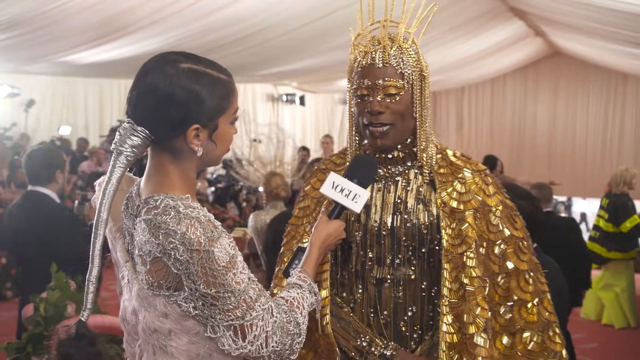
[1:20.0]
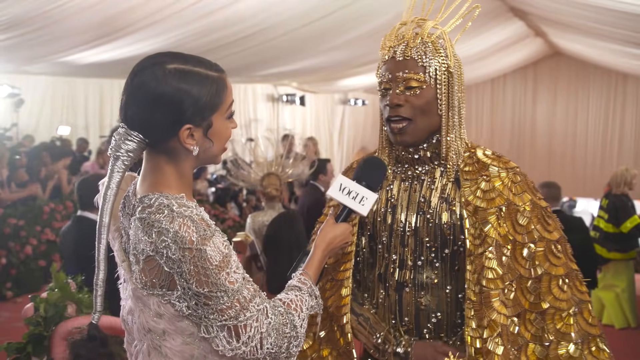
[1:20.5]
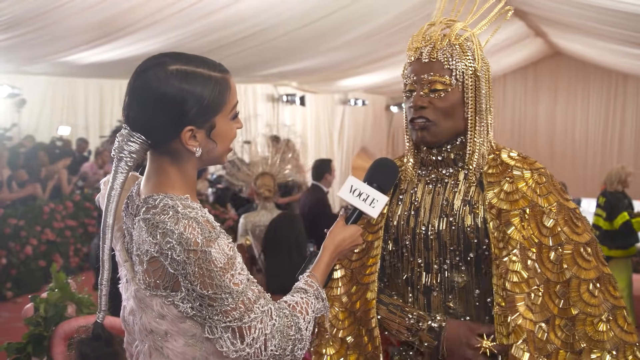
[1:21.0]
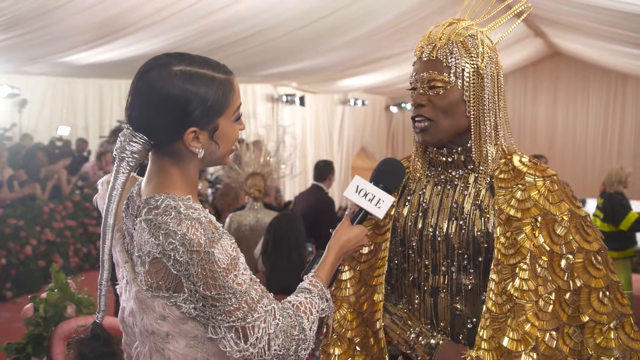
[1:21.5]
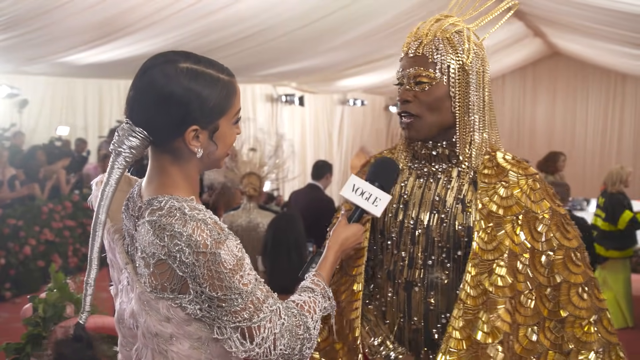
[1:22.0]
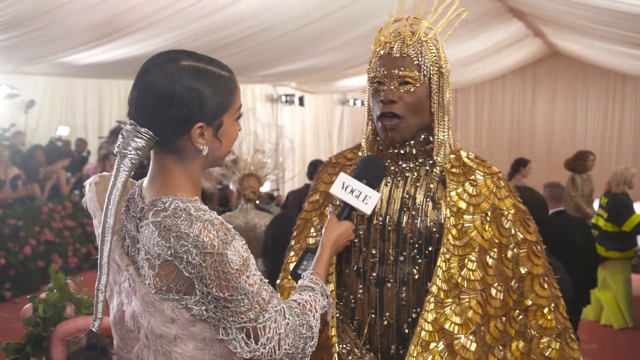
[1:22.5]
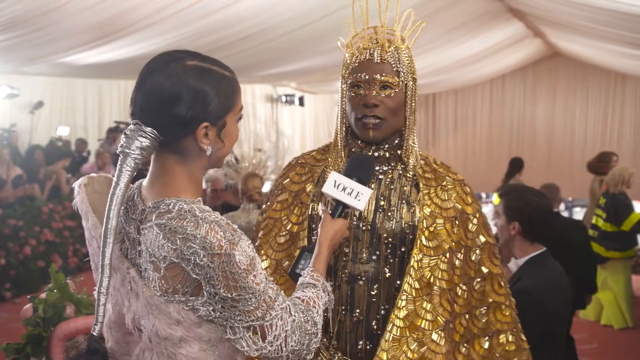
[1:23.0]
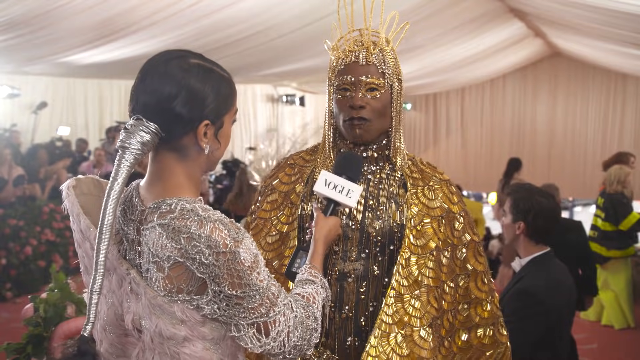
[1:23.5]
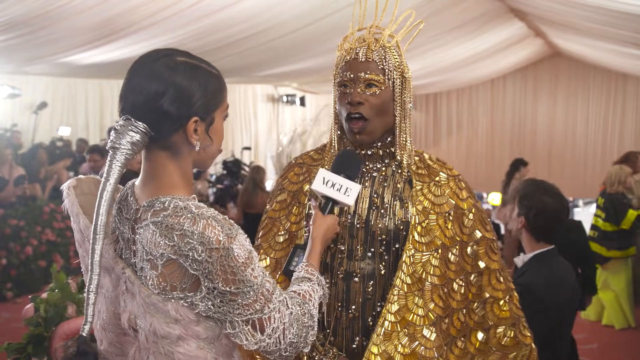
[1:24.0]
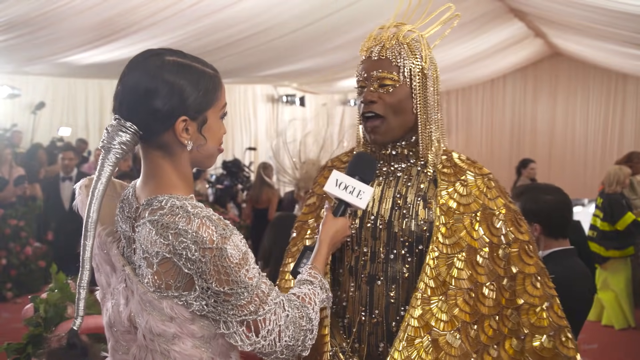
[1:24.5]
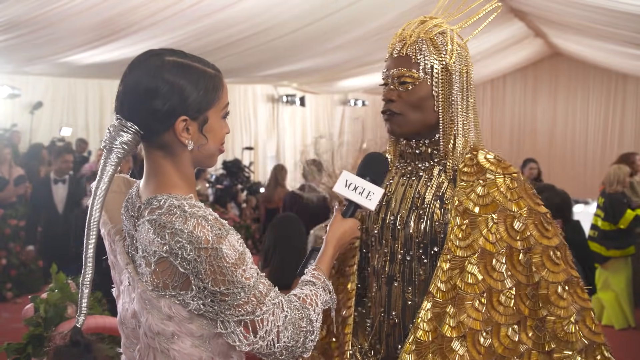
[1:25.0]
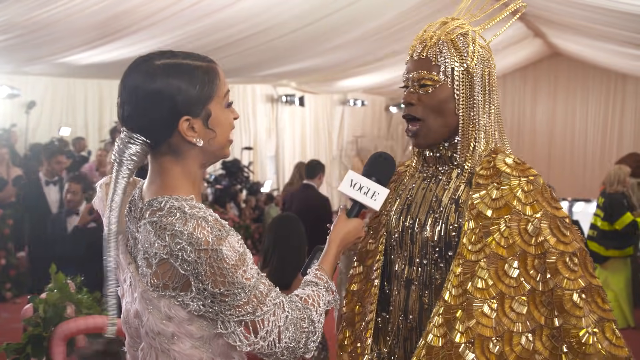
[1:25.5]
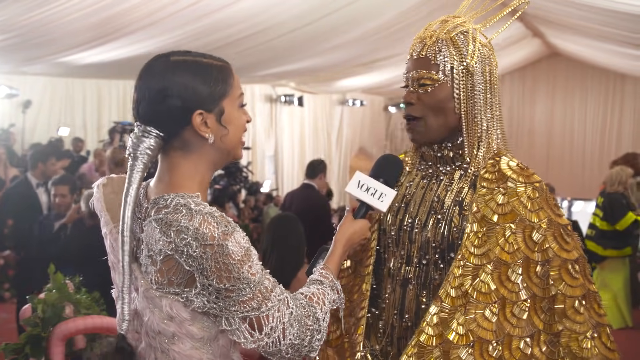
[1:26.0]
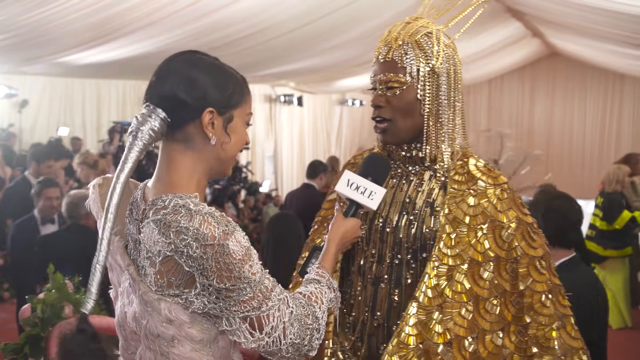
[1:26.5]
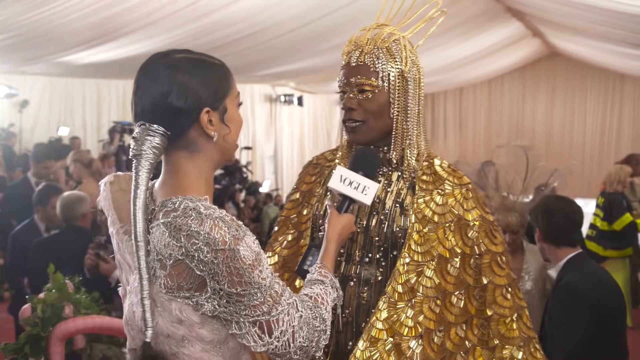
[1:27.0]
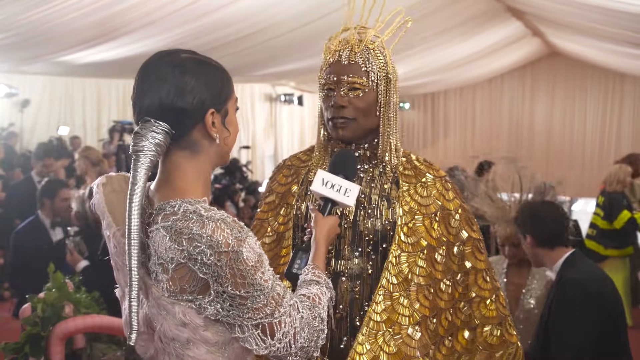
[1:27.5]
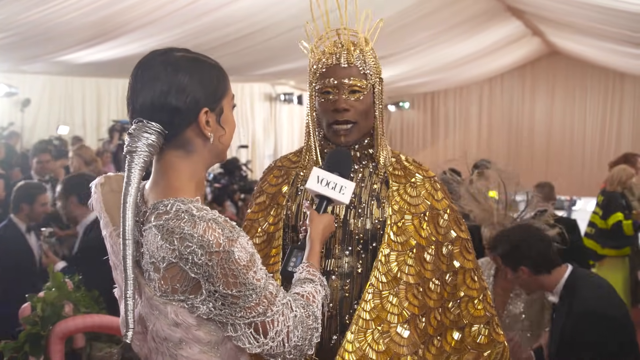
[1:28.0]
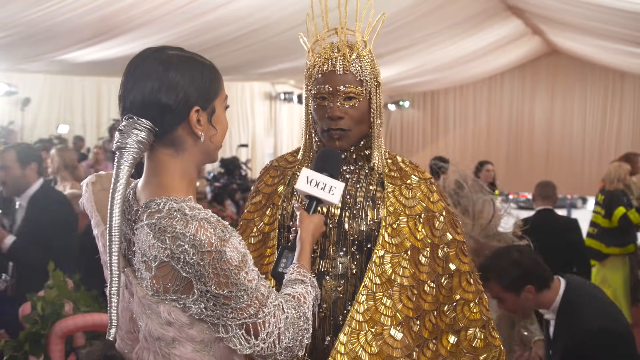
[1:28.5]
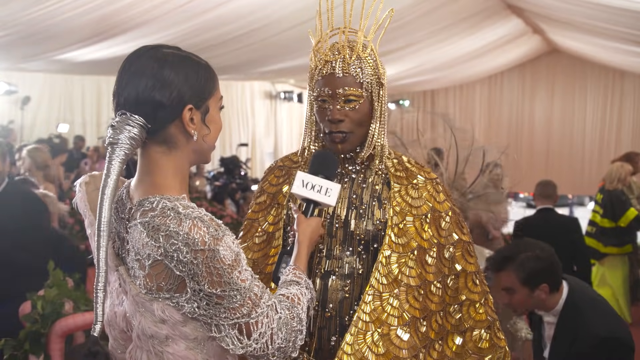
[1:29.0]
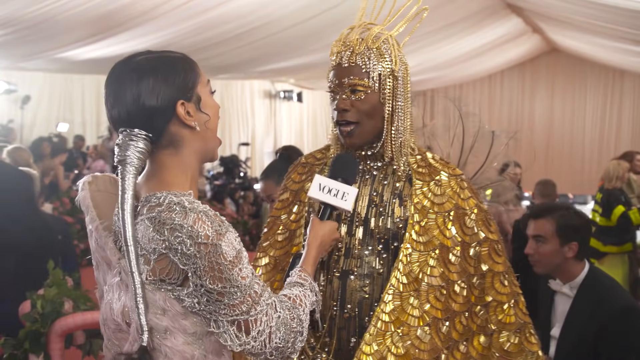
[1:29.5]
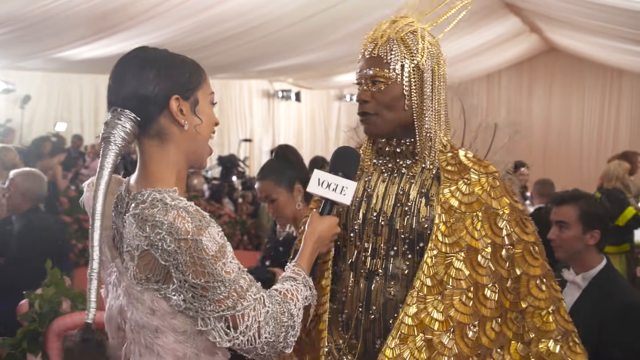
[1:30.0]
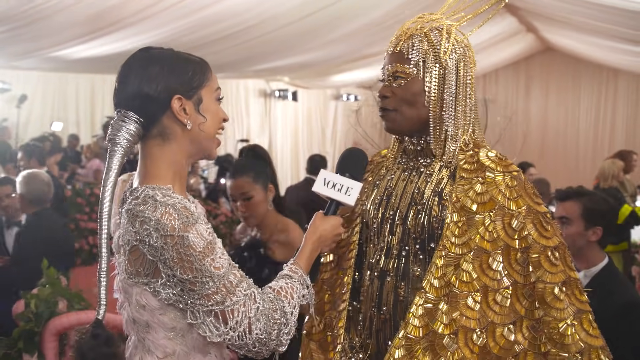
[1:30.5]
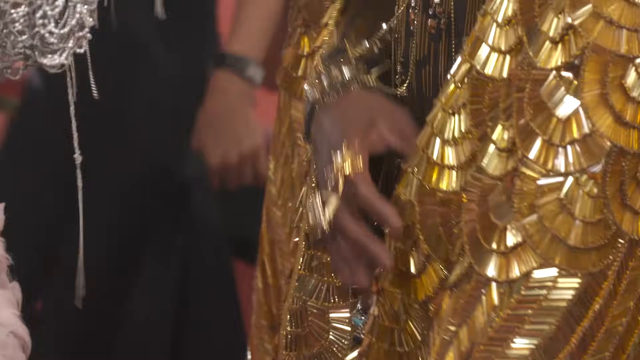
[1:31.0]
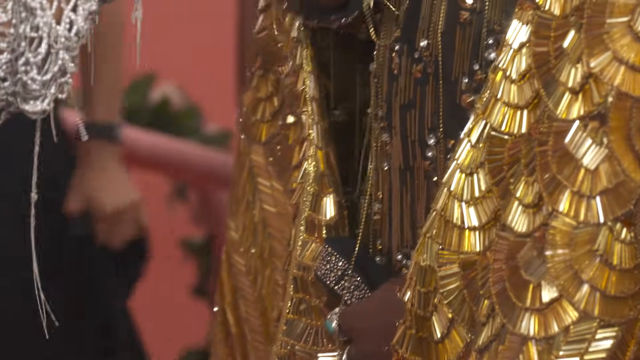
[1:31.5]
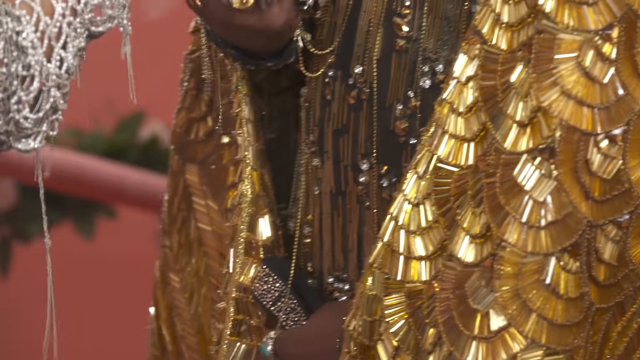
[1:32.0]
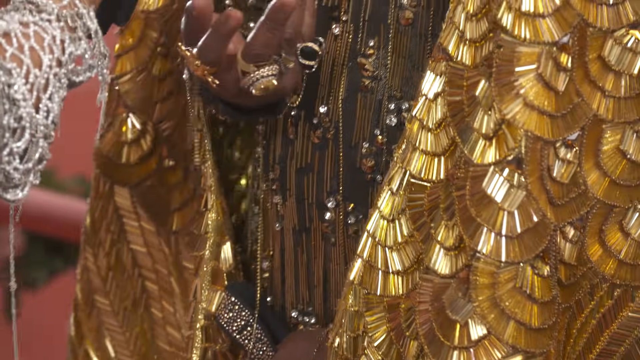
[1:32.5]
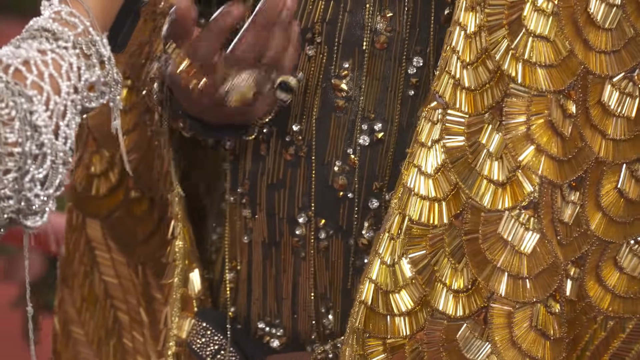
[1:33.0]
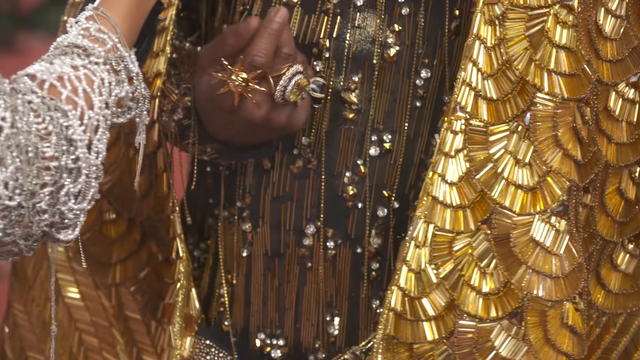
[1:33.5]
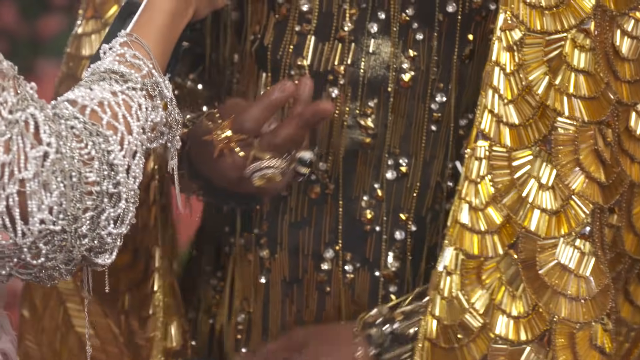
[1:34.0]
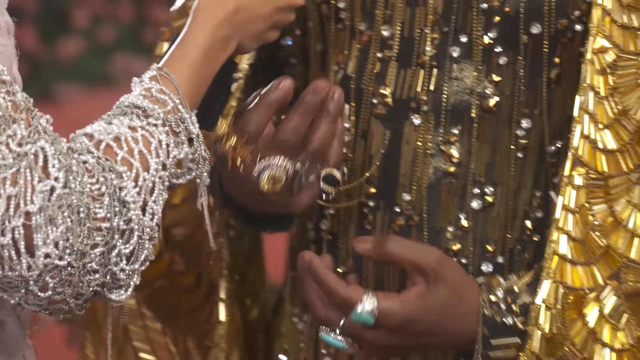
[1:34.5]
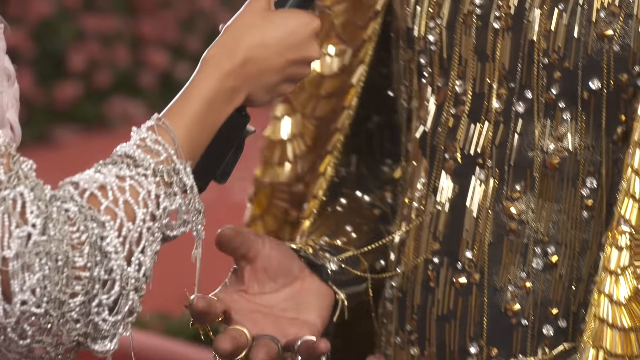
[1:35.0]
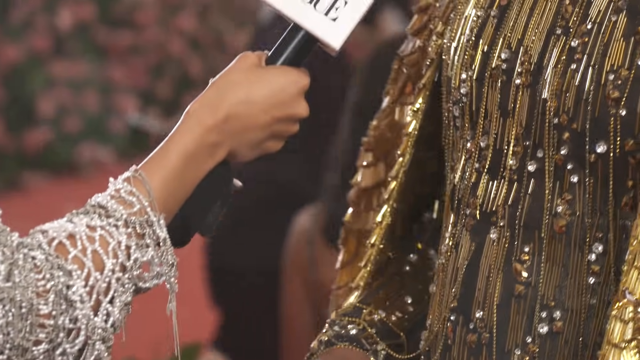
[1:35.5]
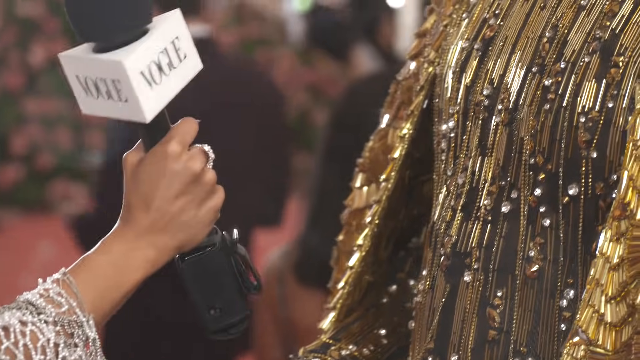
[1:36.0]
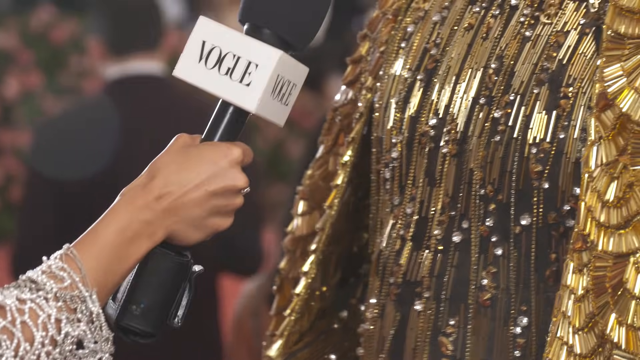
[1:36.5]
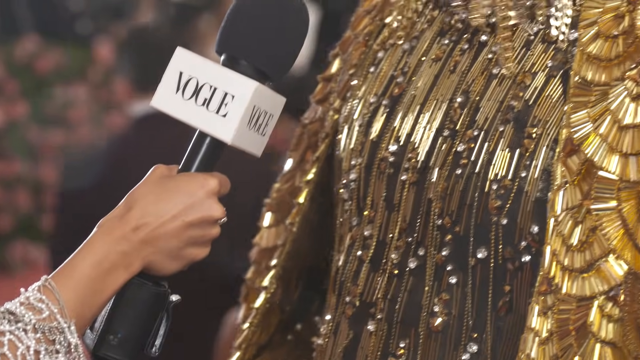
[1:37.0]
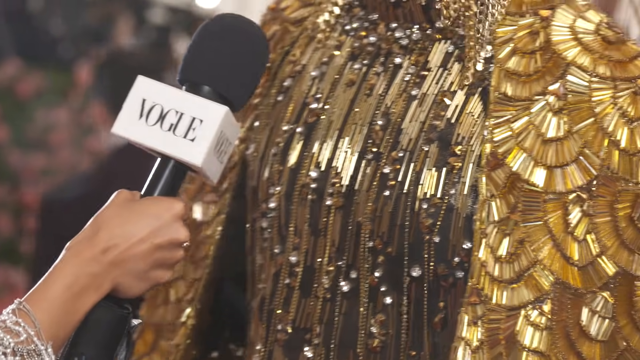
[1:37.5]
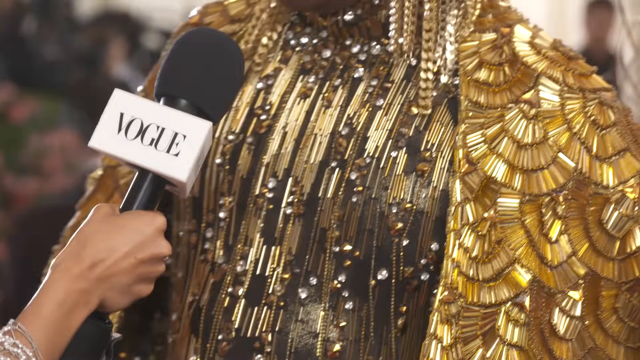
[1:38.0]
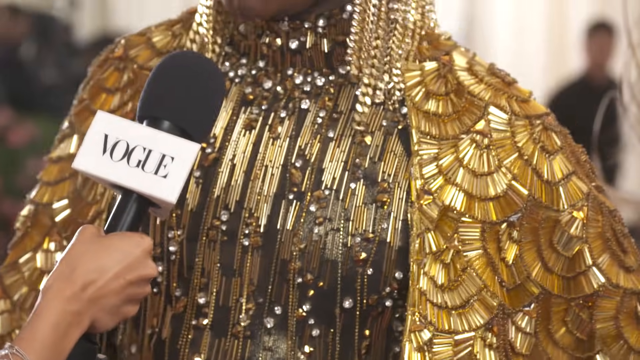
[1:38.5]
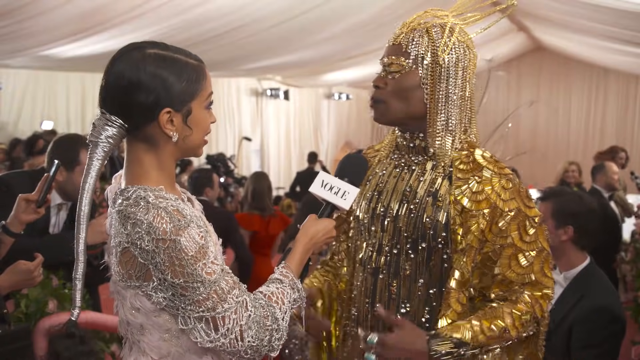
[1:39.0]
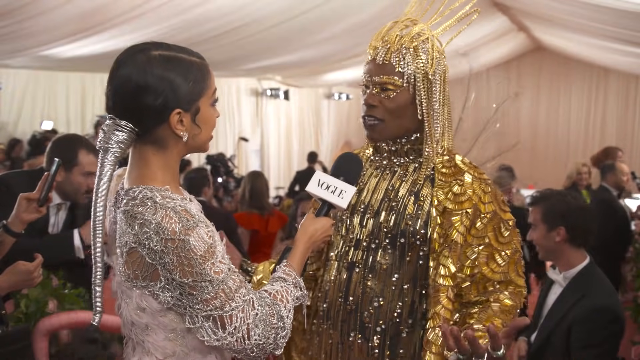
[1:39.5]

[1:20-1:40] A wide view shows the inside of a large tent covered in white chiffon material from the ceiling down to the walls. The chiffon is gathered all over the ceiling and drapes down a bit, and the draping coming down the wall is gathered into pleating. Some of the chiffon toward the very back appears to be a champagne gold color. Many celebrities are in the background, including a woman who appears to be a firefighter, wearing a black and yellow jacket with bright yellow pants. The celebrities in the background appear to be in costume as well, and there appear to be several male Met Gala employees dressed in black suits and white dress shirts. Billy is still being interviewed by the reporter, who has short black hair, sort of like a pixie cut, parted on the right side, and a low bun at the nape of her neck. A silver metallic hair adornment is attached to the bun; it looks like it forms a hose or nozzle, larger at the base and getting smaller toward the tip. She holds the Vogue microphone in her right hand, her arm bent at the elbow, and looks directly in Billy's face as he speaks. He moves a bit from side to side, moves a bit away from her, and moves back in.